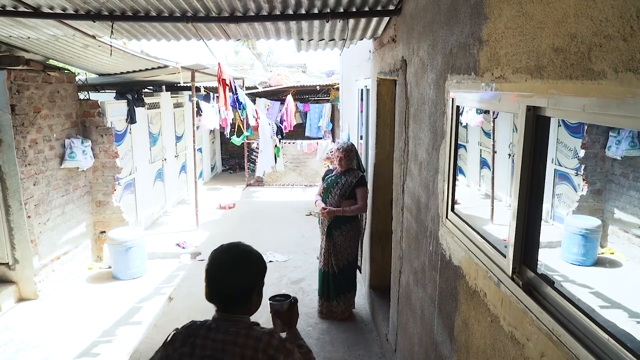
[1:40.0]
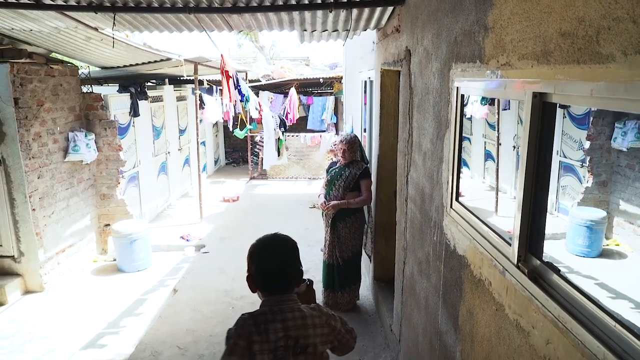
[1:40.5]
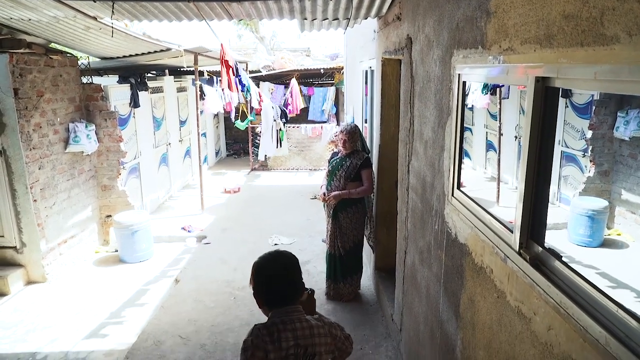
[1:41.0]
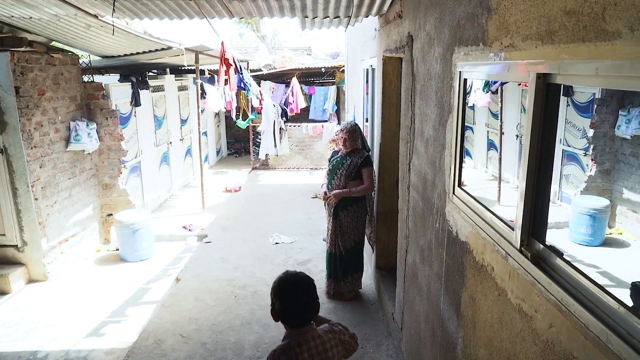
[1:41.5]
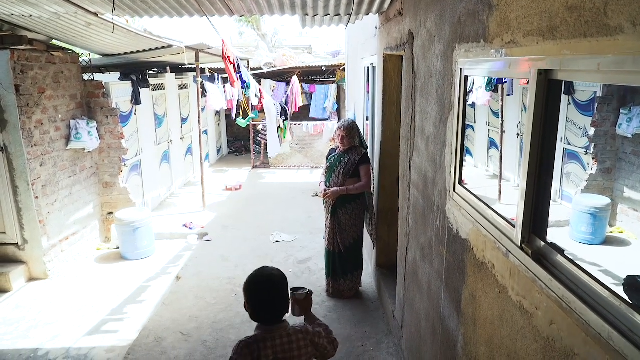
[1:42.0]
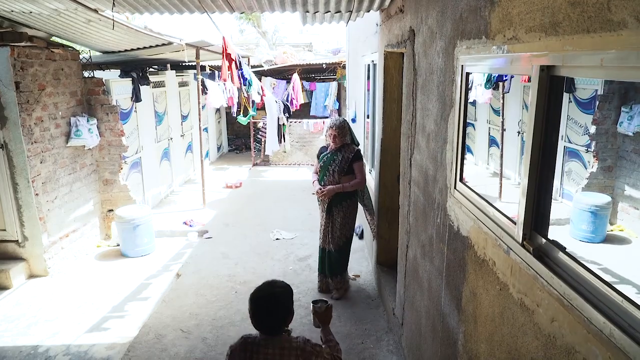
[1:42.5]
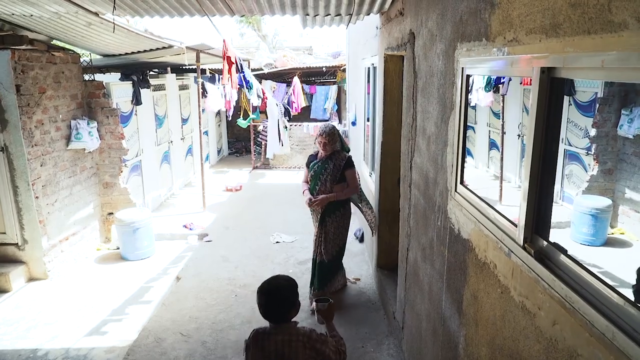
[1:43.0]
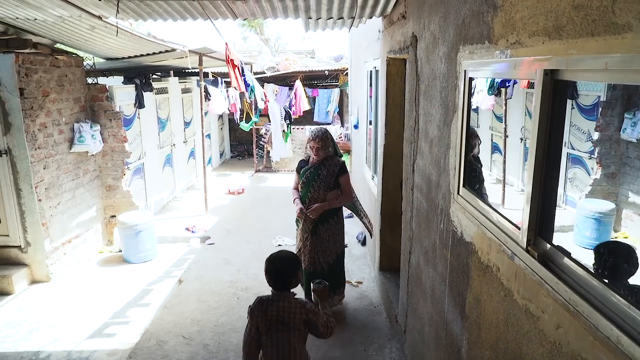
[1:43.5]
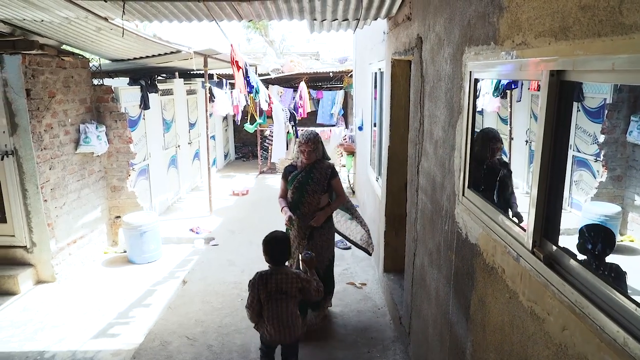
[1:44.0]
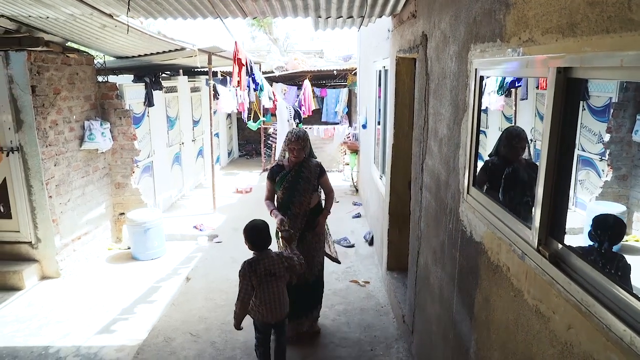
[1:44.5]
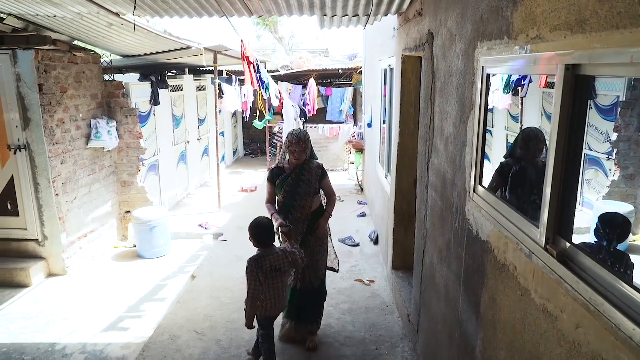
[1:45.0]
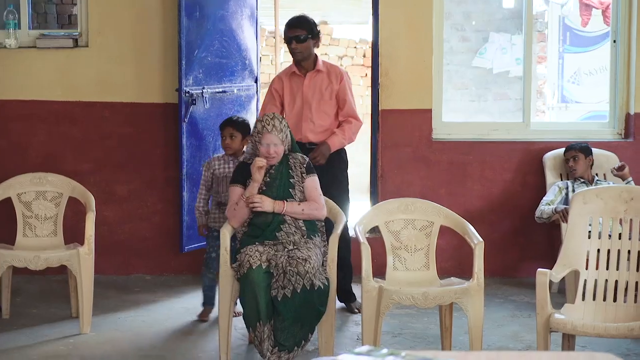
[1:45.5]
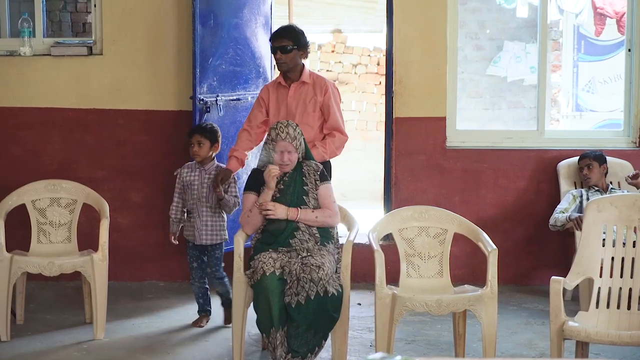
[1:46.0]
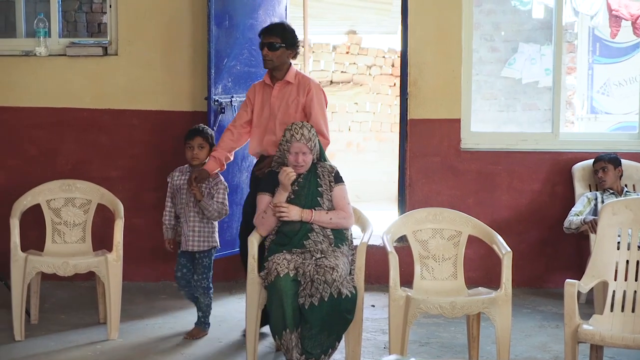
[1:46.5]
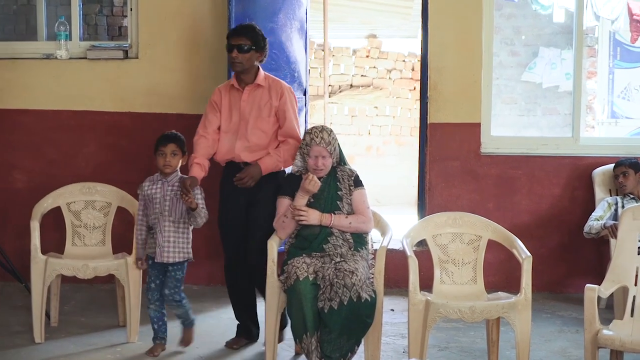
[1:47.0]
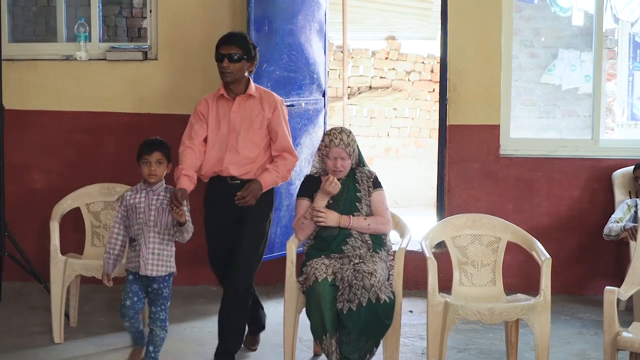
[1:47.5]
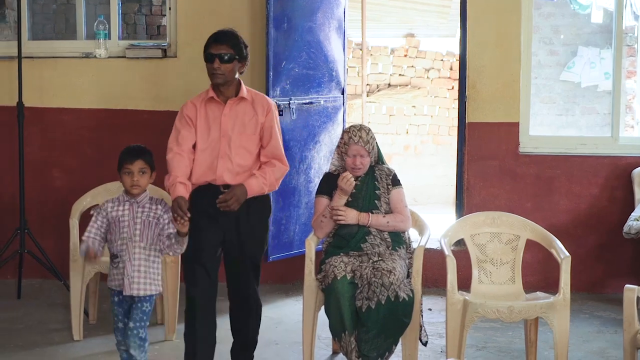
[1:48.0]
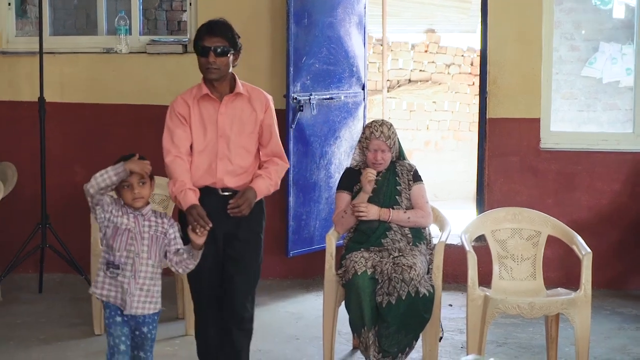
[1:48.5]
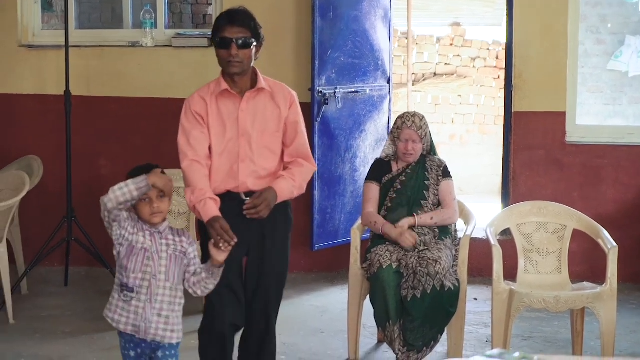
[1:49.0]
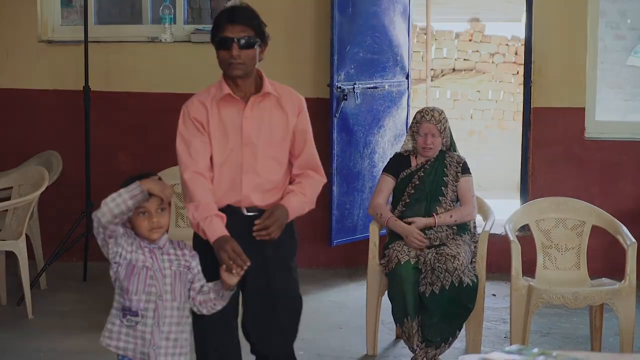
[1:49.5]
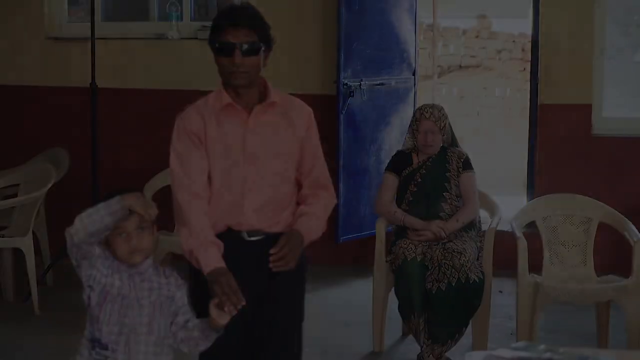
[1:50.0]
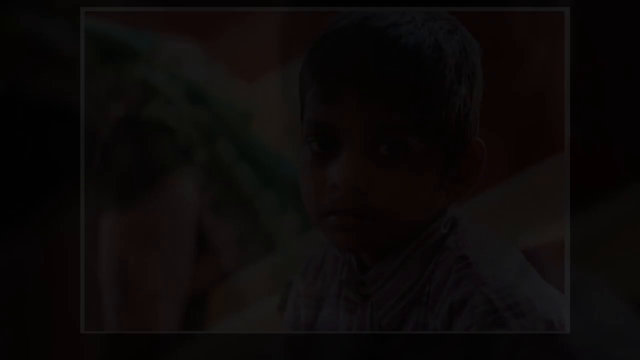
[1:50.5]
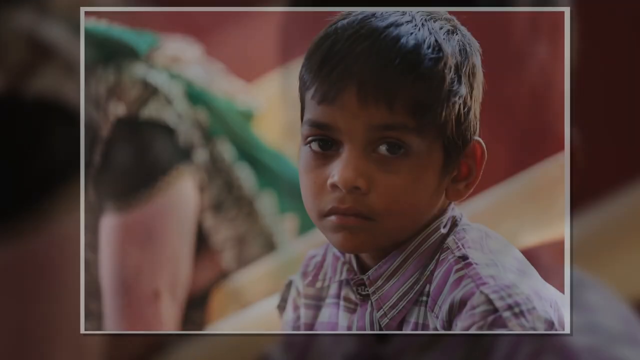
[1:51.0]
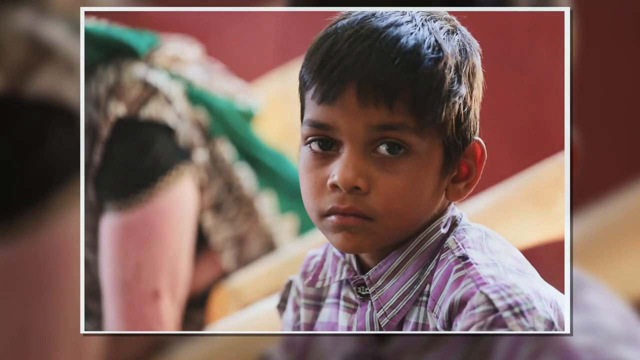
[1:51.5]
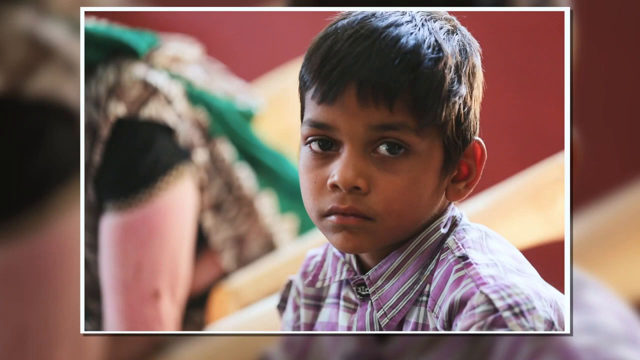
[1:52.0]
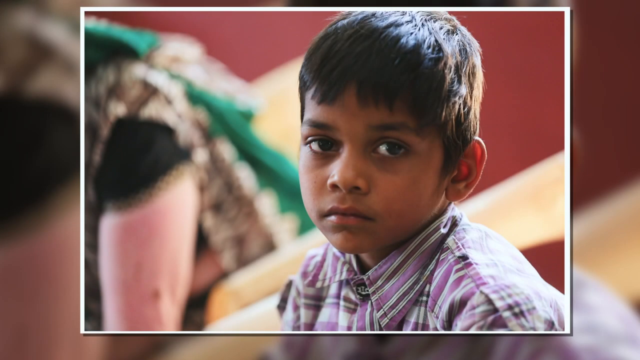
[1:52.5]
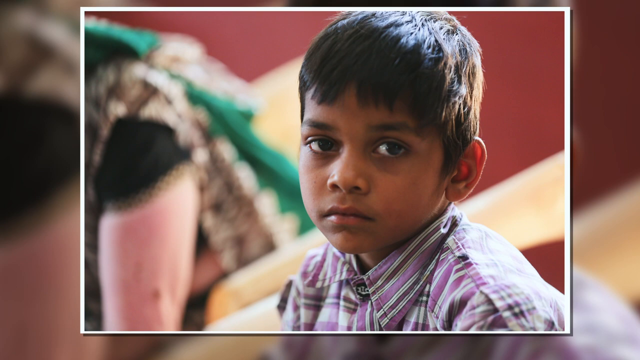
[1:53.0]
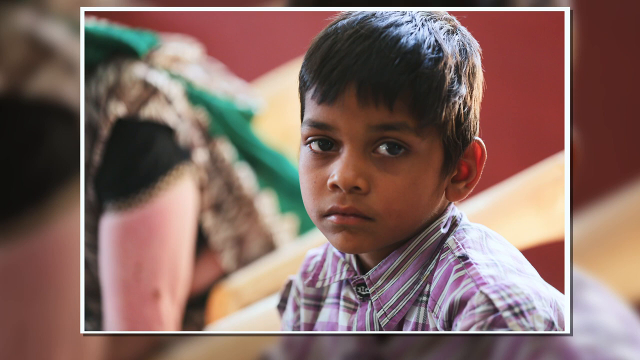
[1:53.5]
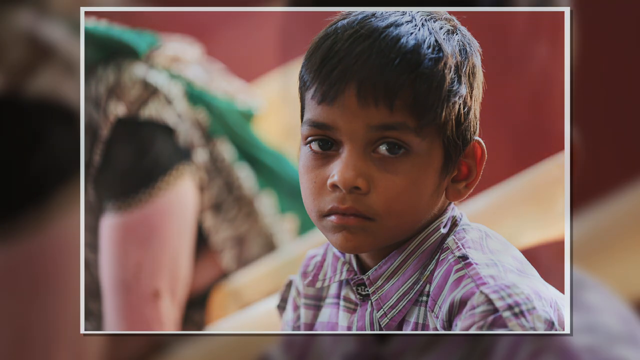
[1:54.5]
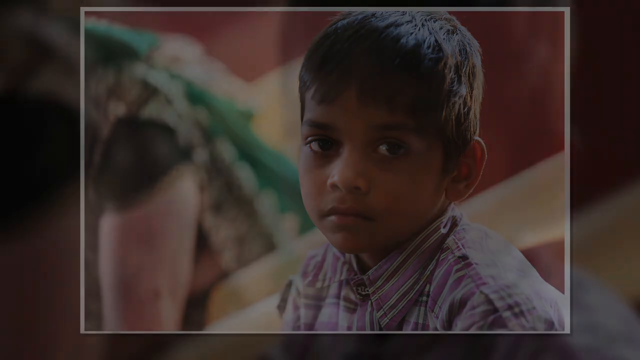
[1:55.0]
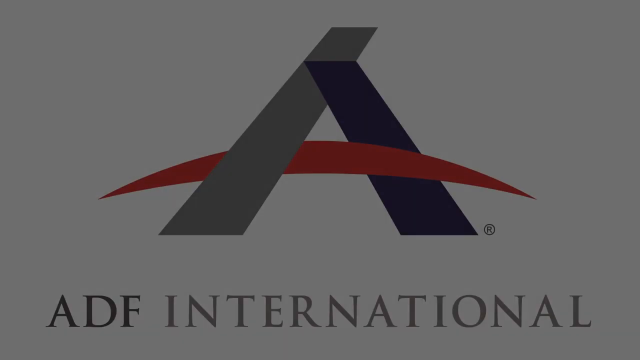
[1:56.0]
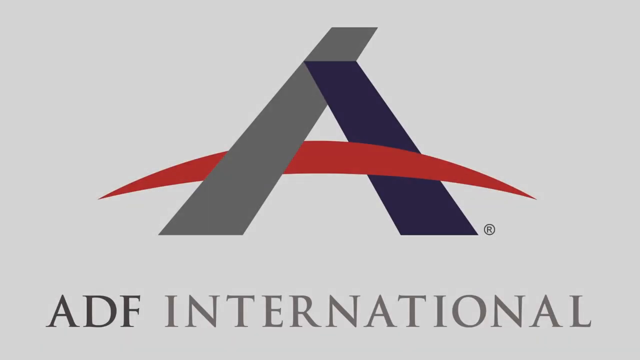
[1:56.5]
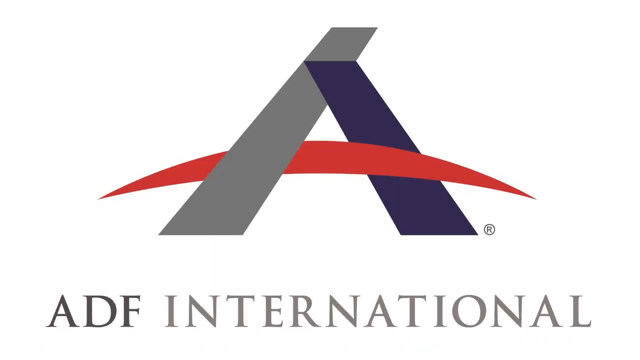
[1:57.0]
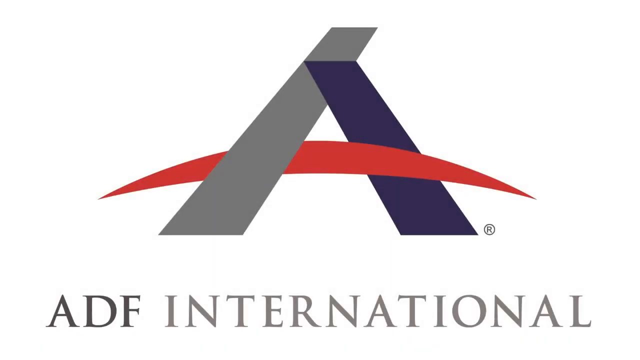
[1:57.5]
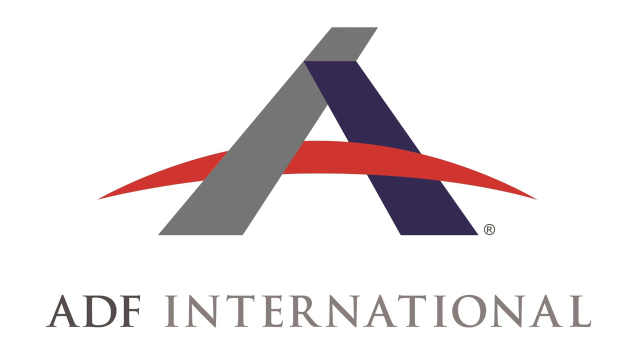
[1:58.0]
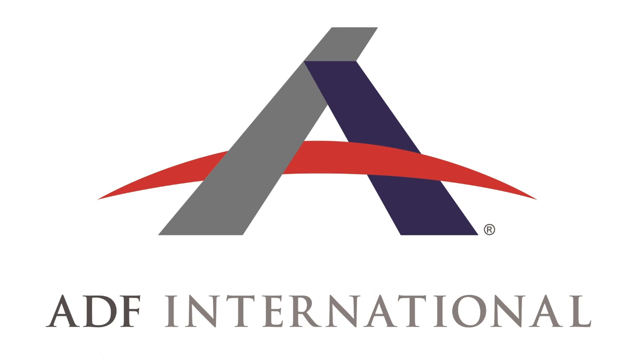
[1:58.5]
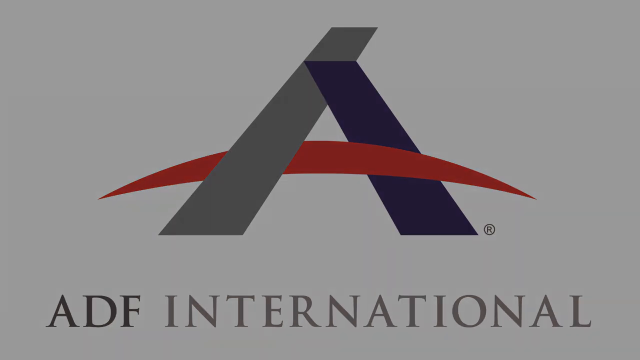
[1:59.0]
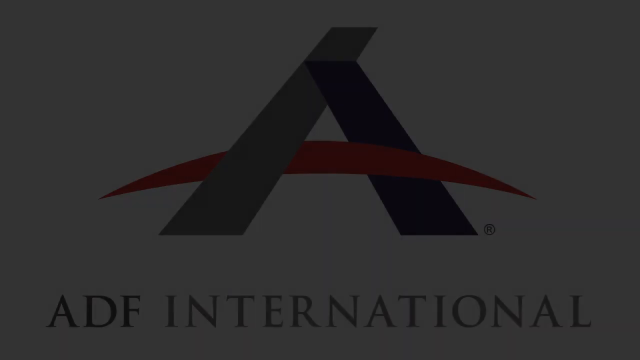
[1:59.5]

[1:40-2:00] The blind woman is out in what looks like a breezeway, standing at the side of the door frame, and the young child appears to bring her a drink or something. In the same red and tan building, the blind man comes in, led by the young child. The woman is already sitting in one of the white chairs, and the older child is on the right, sitting underneath a window. The young boy leads the blind man up to the front. Then a shot shows just the young boy, with the woman kind of visible in the background; he stares with big eyes at the camera. There seems to be a doorway on the opposite side from where they were, and there are some buckets, barrels and other items in the dwelling. The shot fades out to the white card with "ADF International" and the logo.